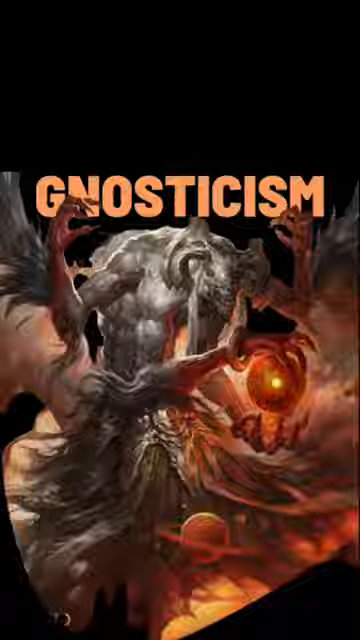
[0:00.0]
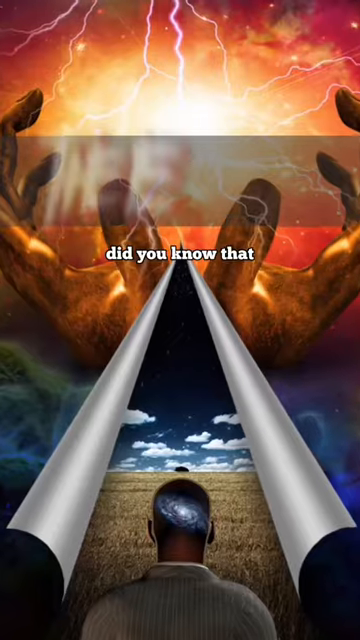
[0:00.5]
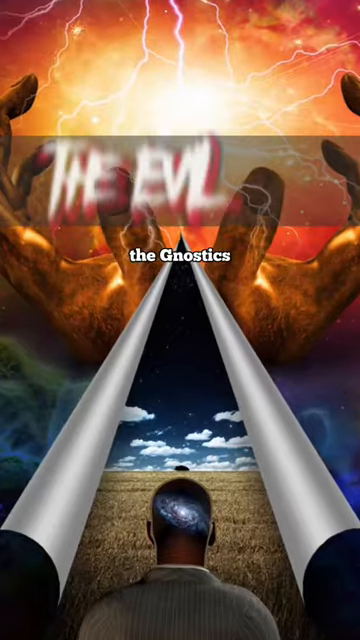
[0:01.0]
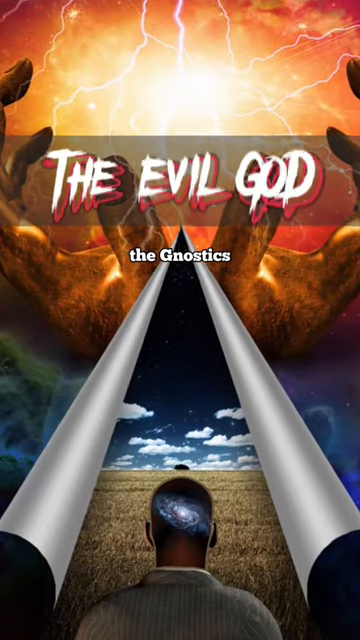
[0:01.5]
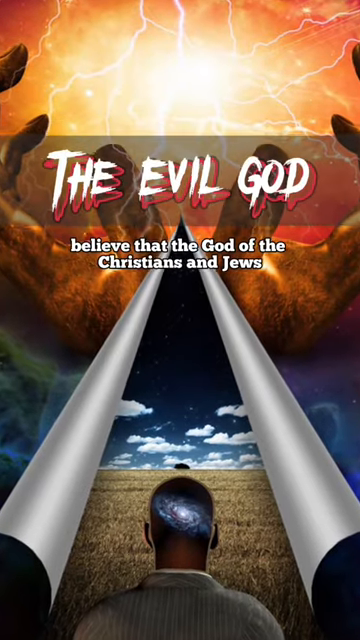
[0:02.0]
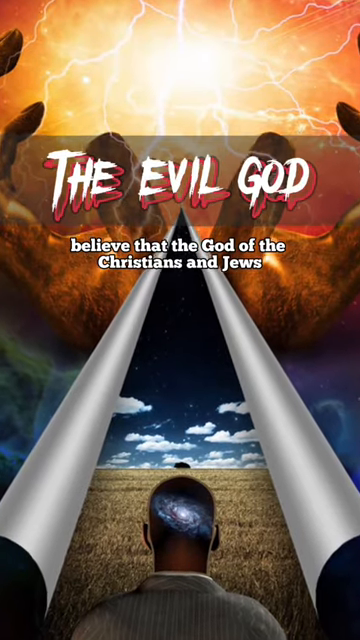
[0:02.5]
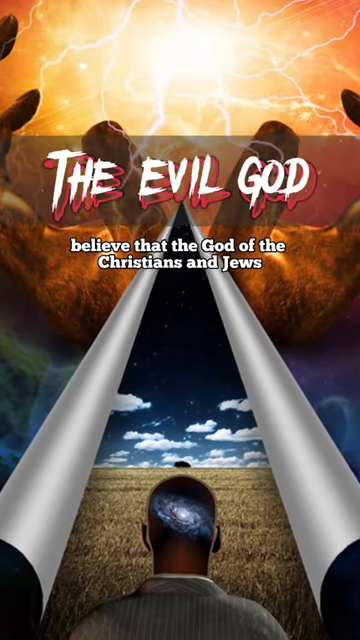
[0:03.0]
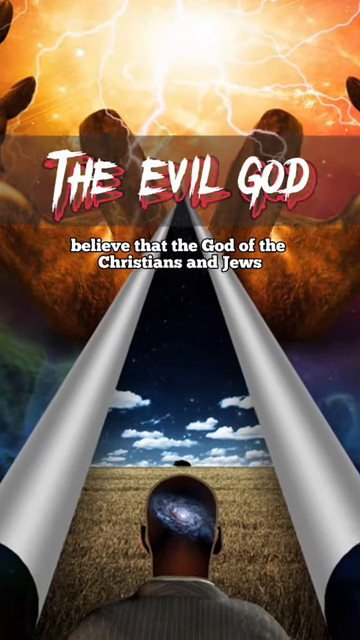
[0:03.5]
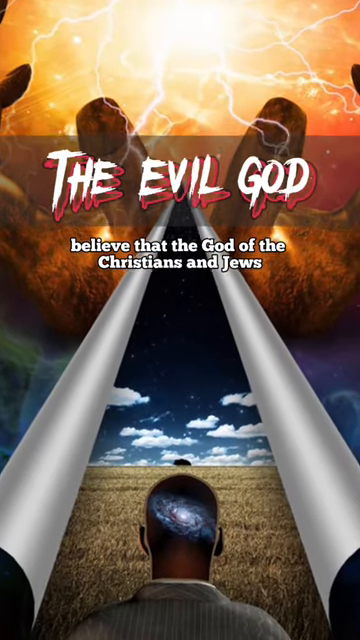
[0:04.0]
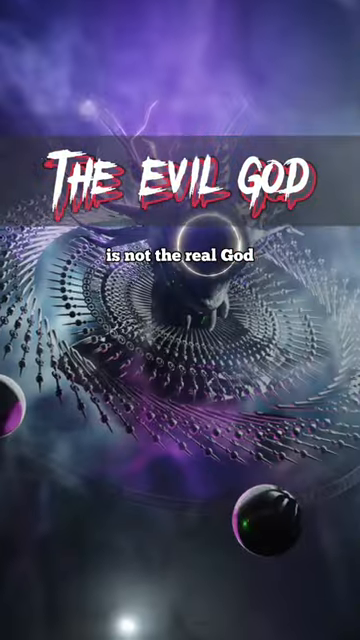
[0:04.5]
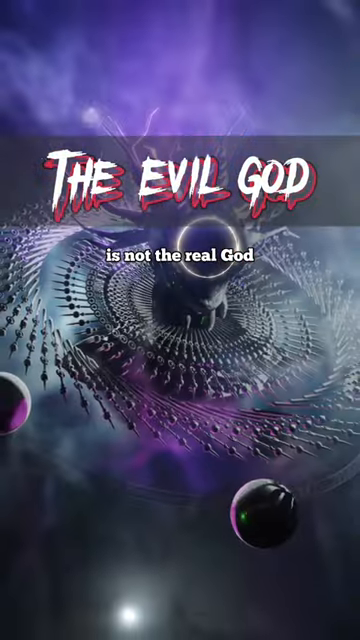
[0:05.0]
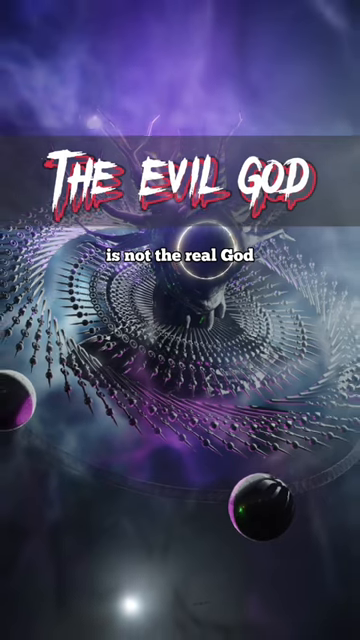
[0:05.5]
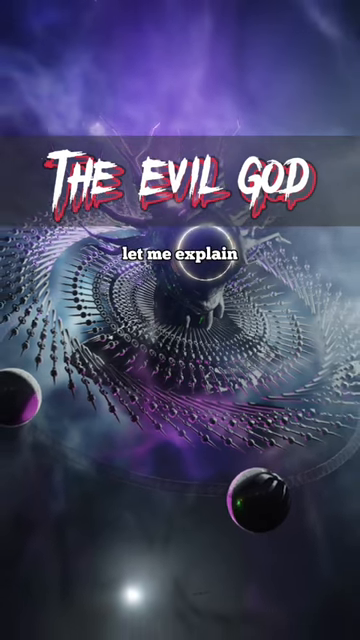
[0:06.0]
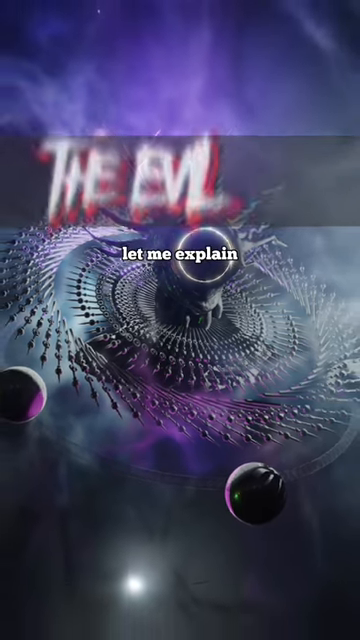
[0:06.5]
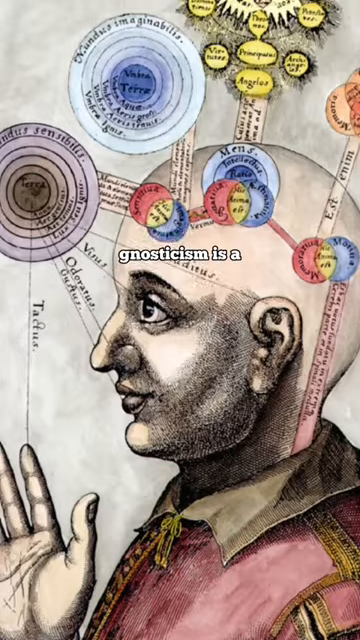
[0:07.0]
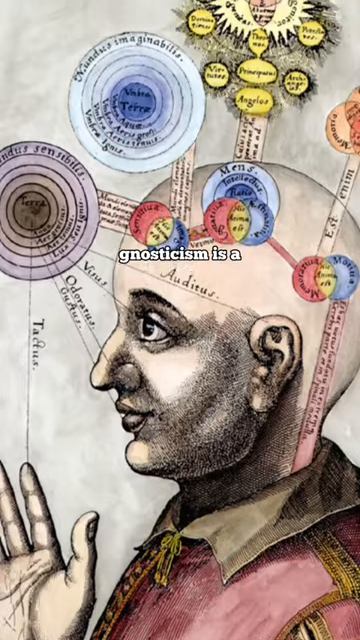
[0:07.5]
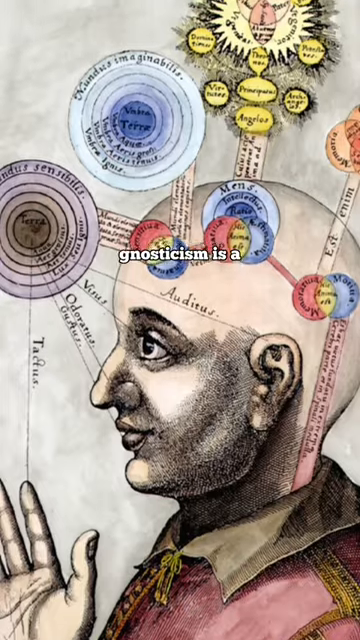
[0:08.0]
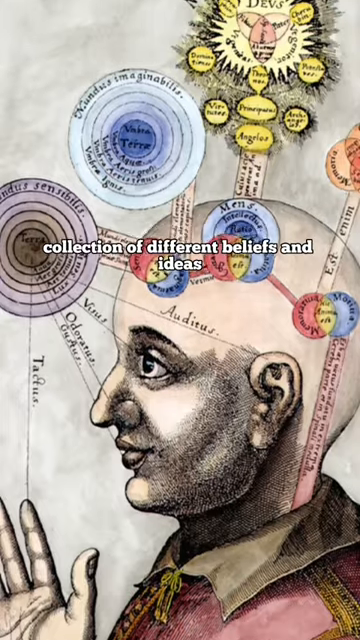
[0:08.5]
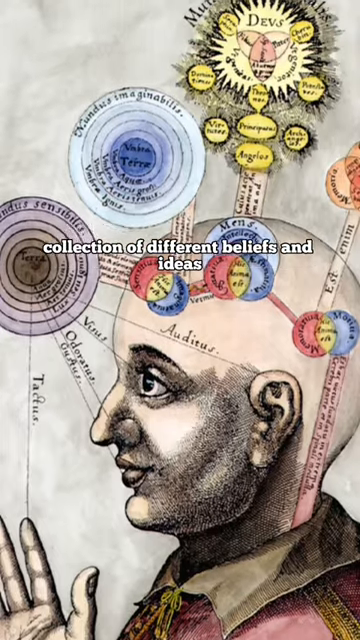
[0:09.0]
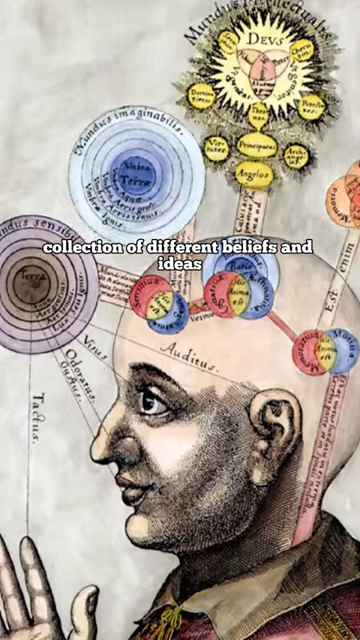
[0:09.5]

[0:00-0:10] The video, titled are there two different gods, opens with a picture of a man seen from the back of his head, looking forward across the sky toward a bright light and some rocks. On-screen text reads "the evil God the Gnostics believe that the God of the Christians and Jews is not the real God let me explain Gnosticism is a collection of different beliefs and ideas". After the picture of the man comes an unusual picture of a solar system in space; something in the middle of it looks like a head with Medusa-like snakes coming out of it. Next is a picture of a bald man turned sideways, some kind of early drawing relating to Gnostic beliefs, part of it about the devil.